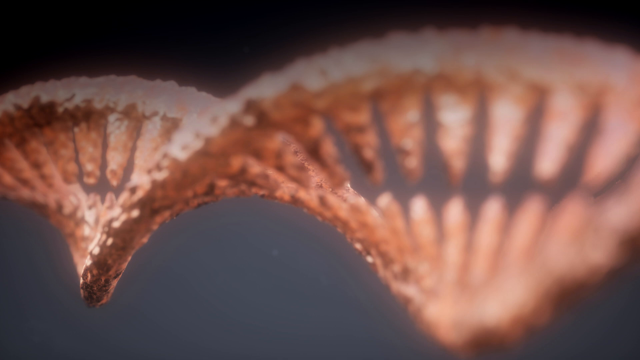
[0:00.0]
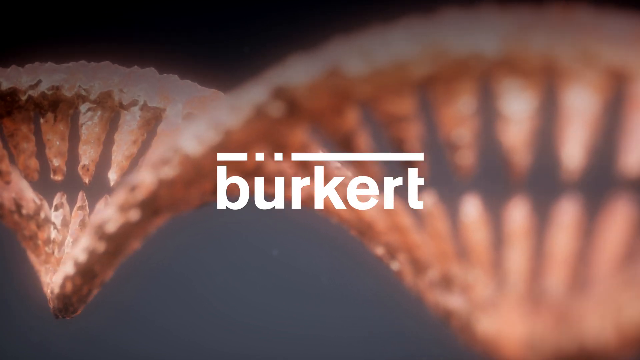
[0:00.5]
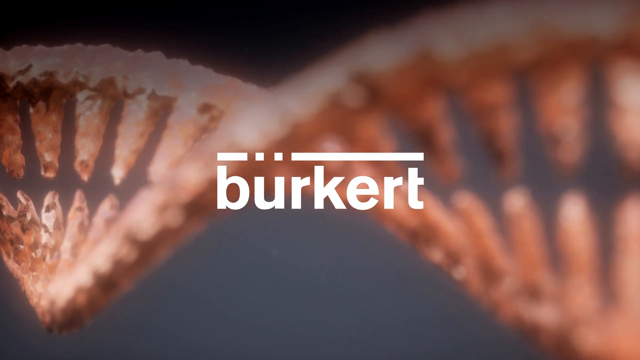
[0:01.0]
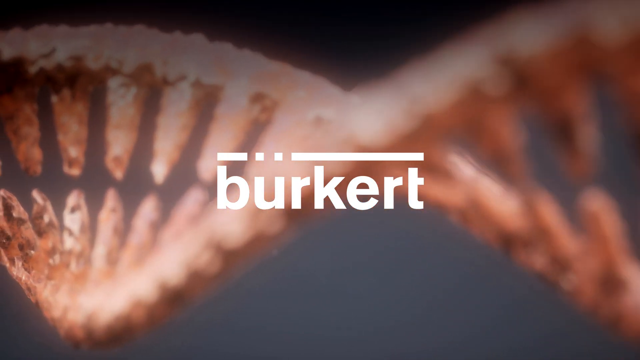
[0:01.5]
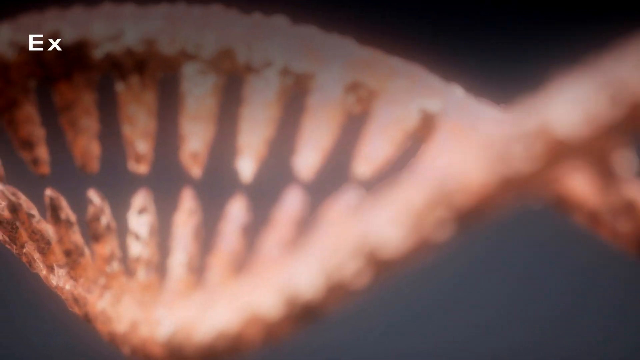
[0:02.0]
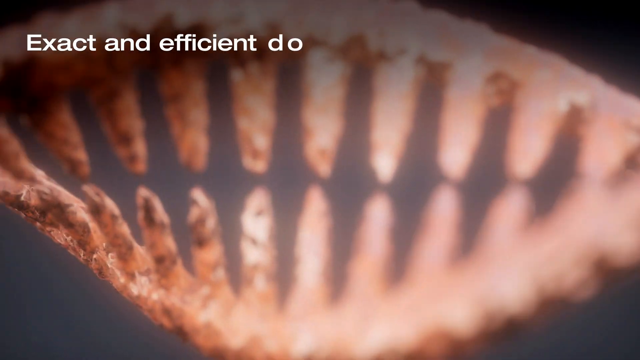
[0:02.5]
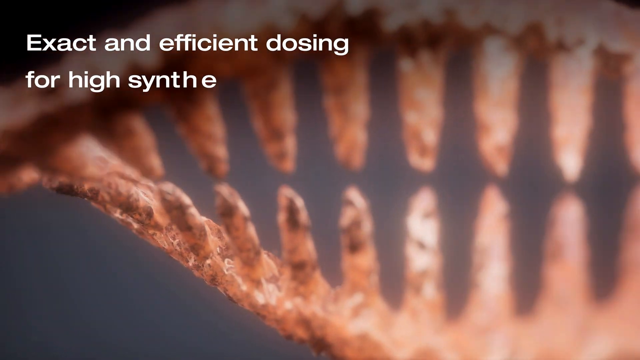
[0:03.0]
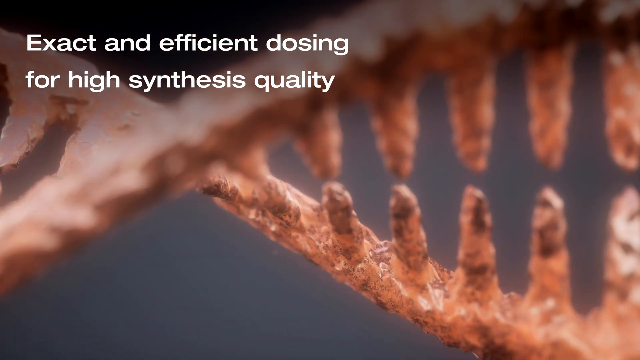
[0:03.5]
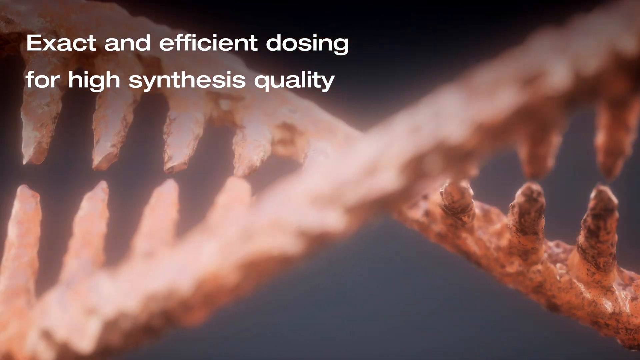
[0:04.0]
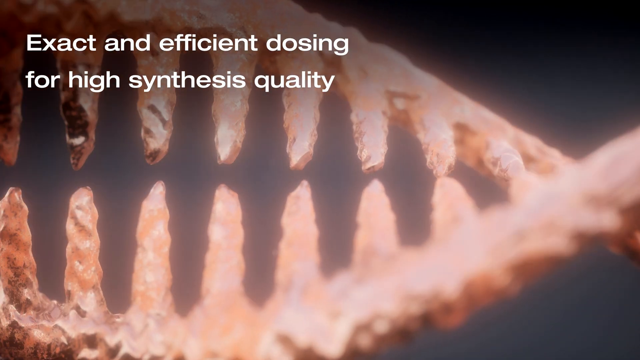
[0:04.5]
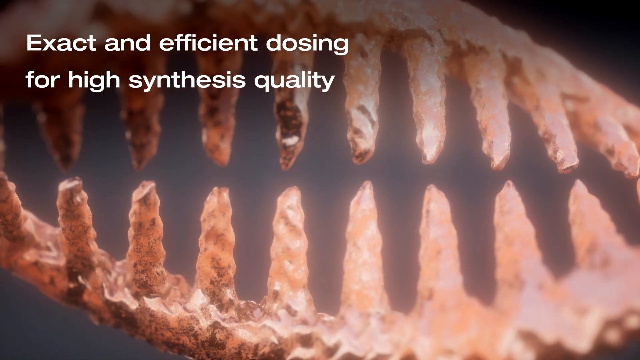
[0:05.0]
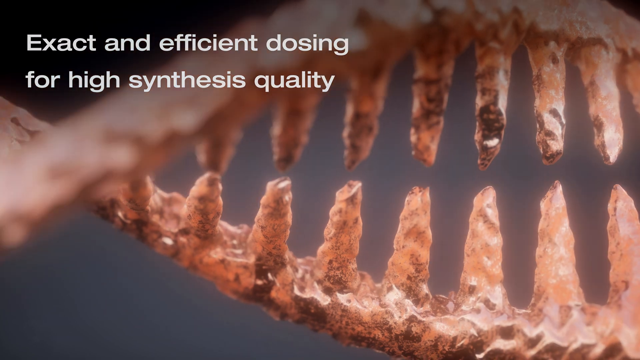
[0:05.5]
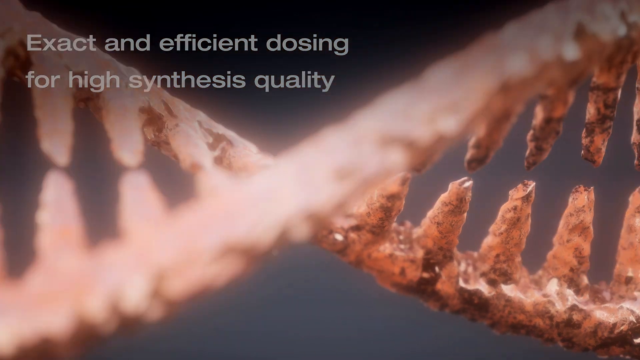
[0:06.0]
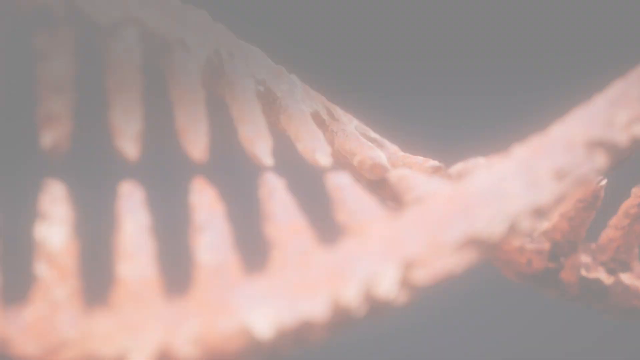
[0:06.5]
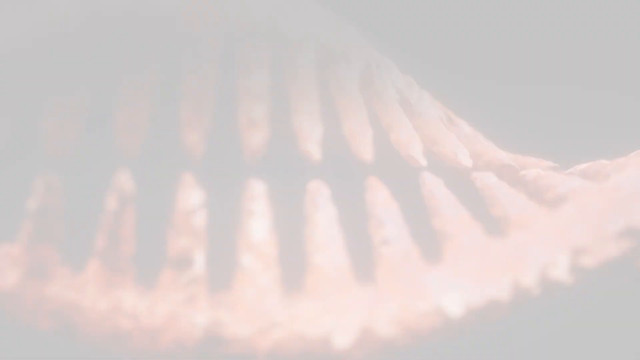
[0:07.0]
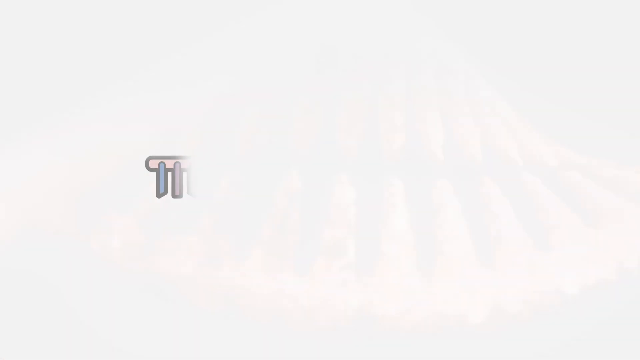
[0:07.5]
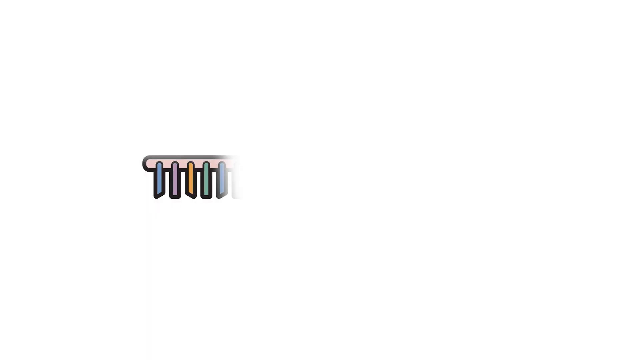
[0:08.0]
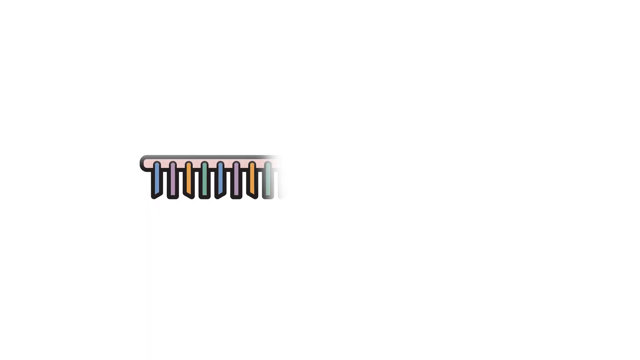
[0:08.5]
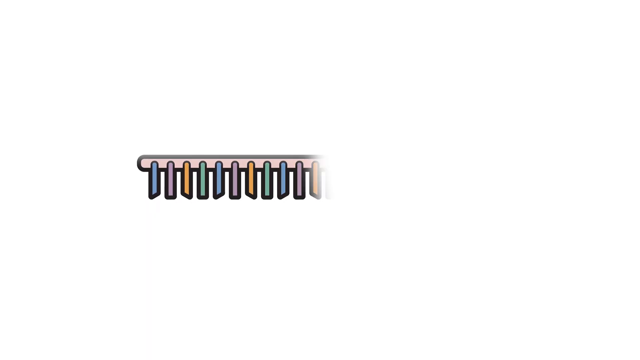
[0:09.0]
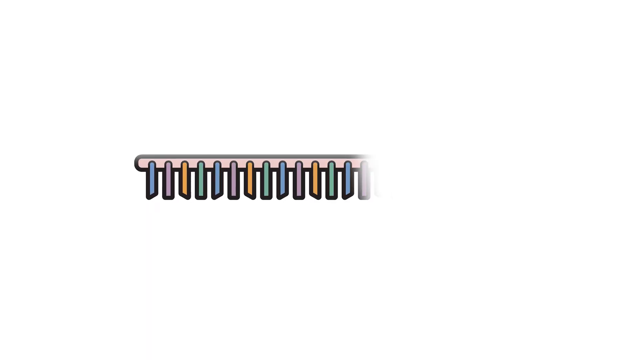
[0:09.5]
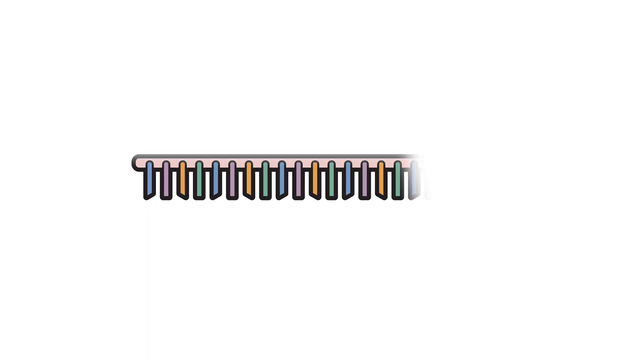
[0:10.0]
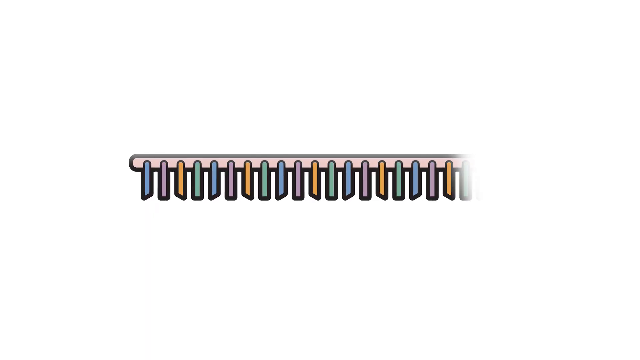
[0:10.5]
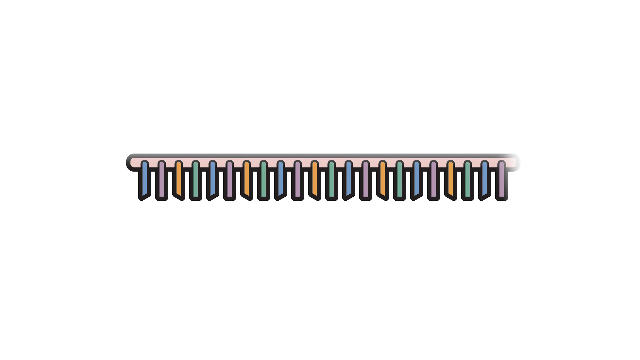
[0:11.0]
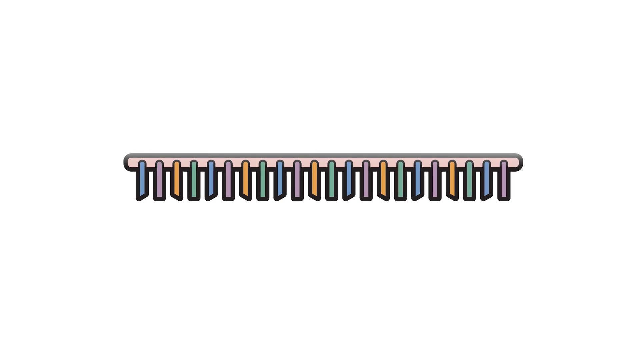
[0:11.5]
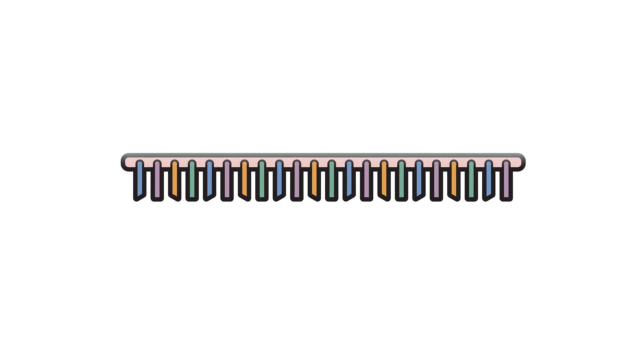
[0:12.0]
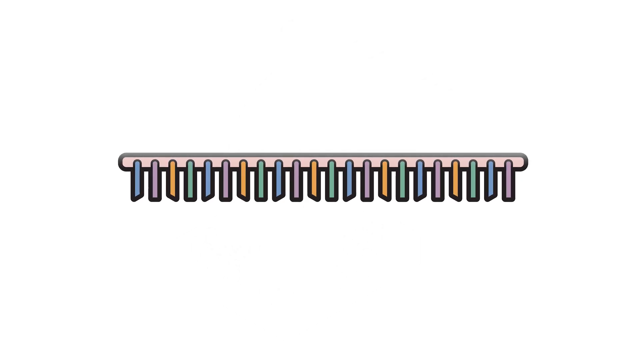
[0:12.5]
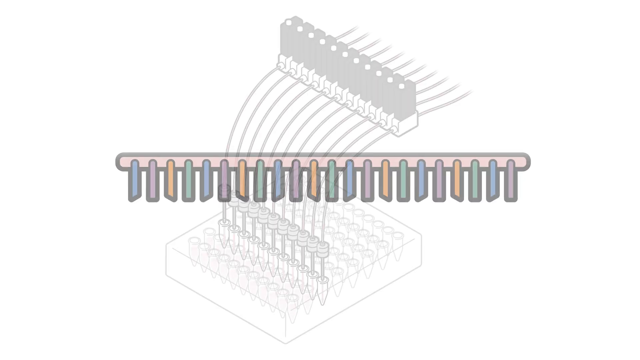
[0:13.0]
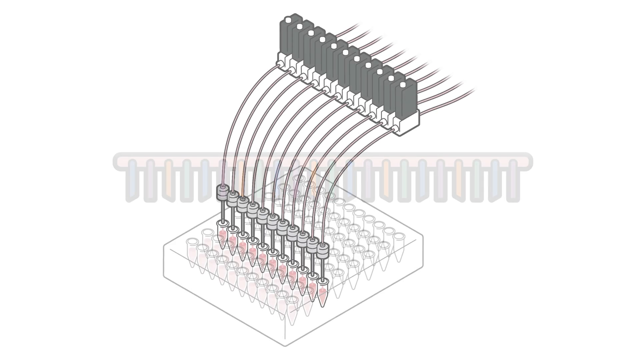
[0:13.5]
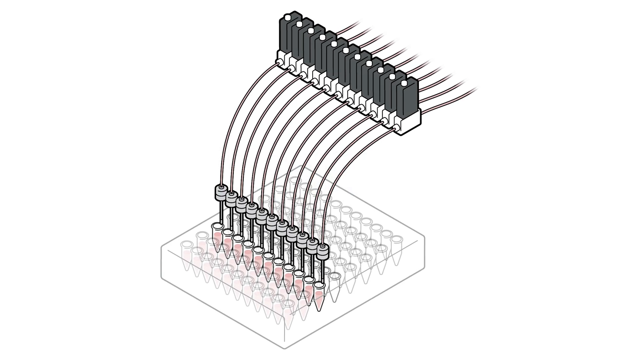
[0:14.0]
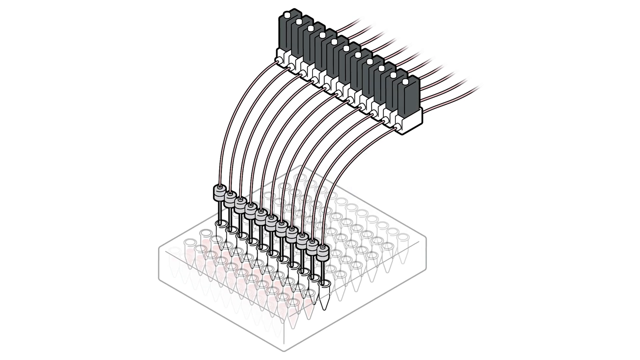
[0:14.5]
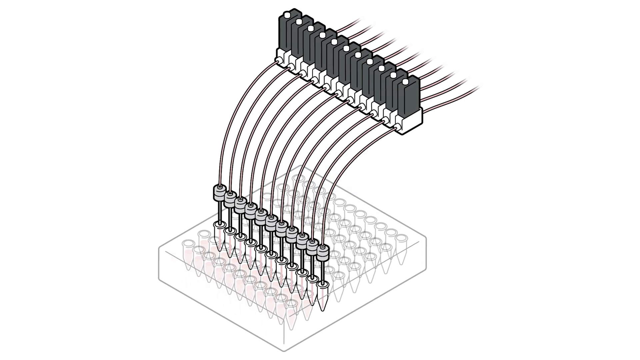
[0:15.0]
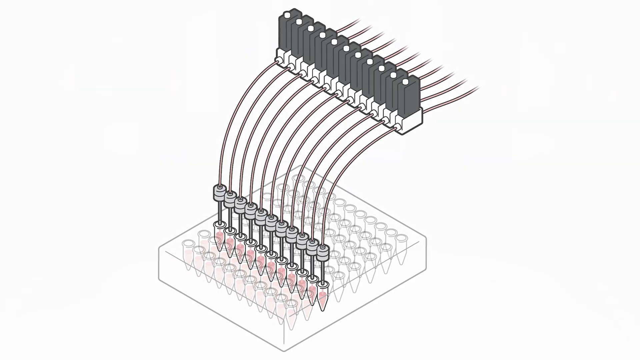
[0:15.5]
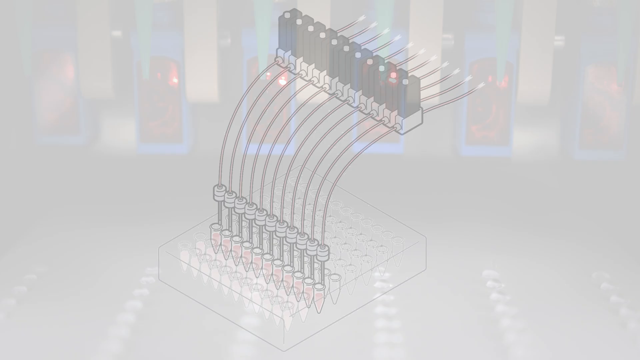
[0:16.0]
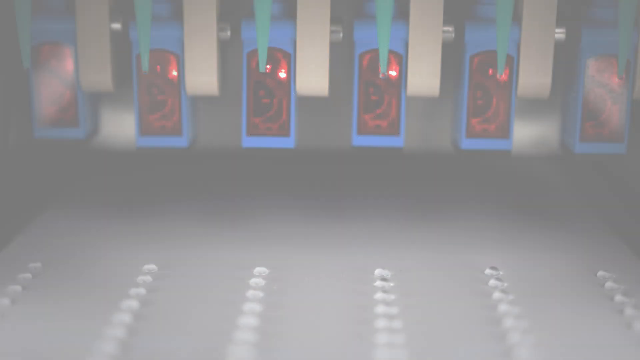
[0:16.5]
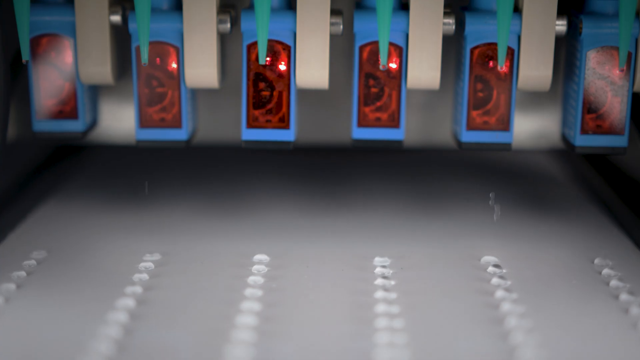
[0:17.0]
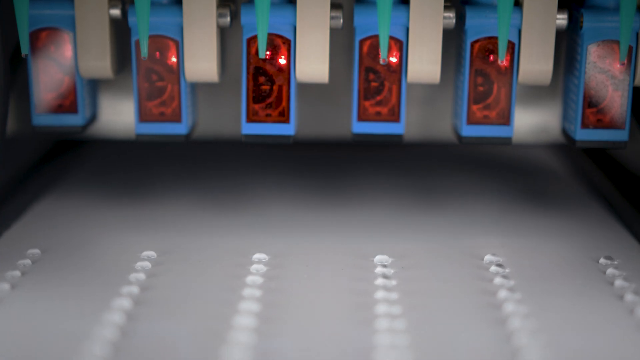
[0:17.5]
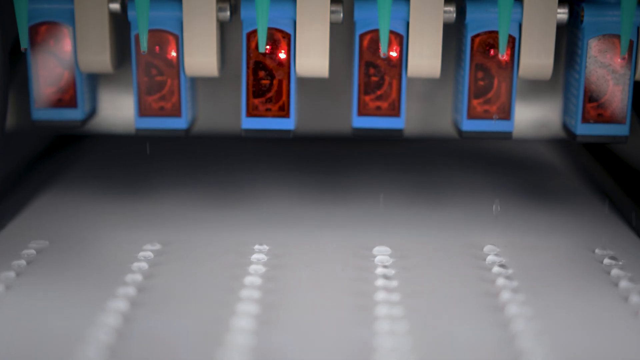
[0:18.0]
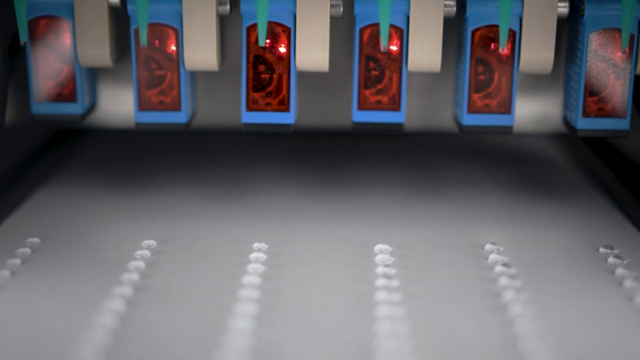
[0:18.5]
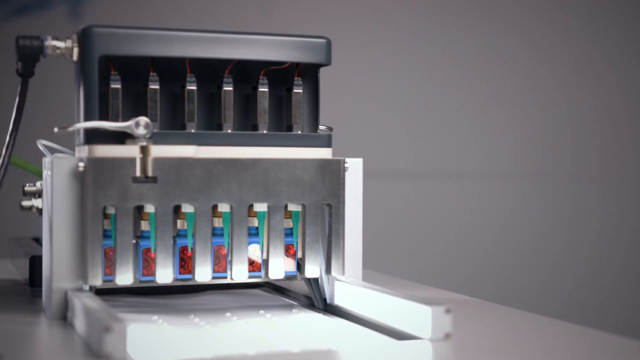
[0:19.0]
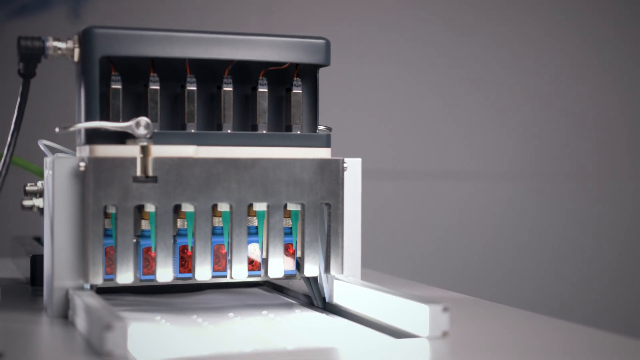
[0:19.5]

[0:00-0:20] An animated picture of DNA curves around and around, and the text reads "exact and efficient dosing for high synthesis quality." The DNA strands go together almost like two little combs circled around each other. The company name Burkert appears on screen. Next there is something that looks like a long horizontal stretch with little pokey parts coming out of it; these pegs are different colors, including beige, blue and orange. A procedure follows in which a computerized system fills little tube areas with liquid. The computerized system then puts little droplets of fluid onto a surface, probably for testing DNA or structures of things.